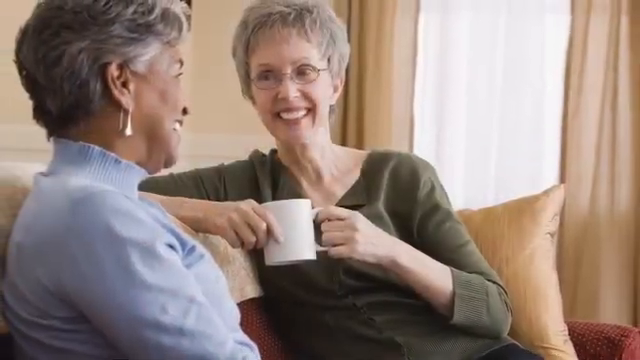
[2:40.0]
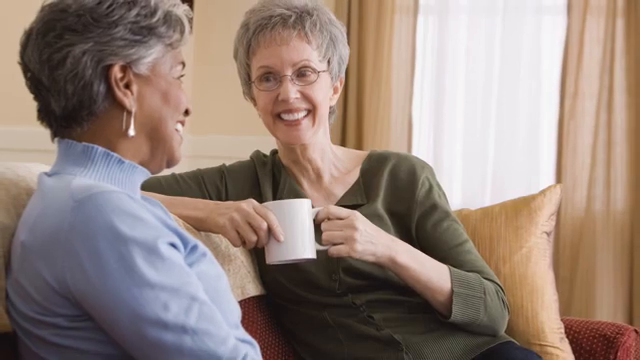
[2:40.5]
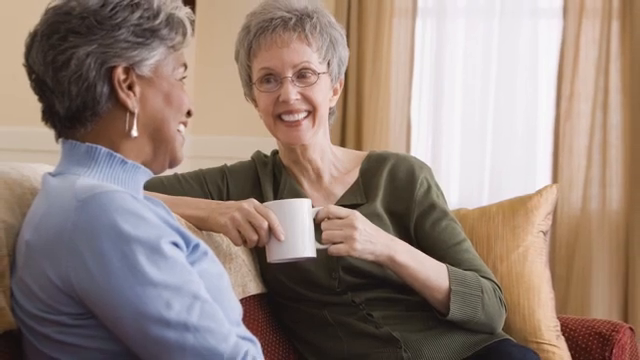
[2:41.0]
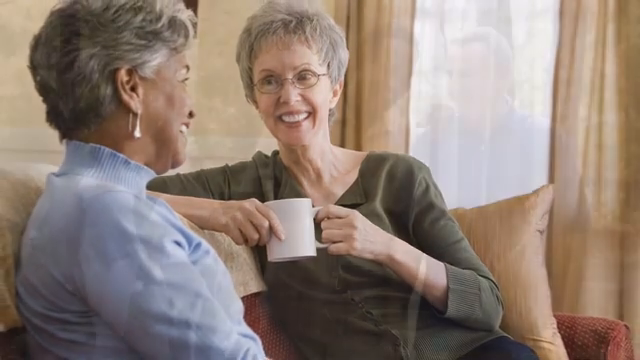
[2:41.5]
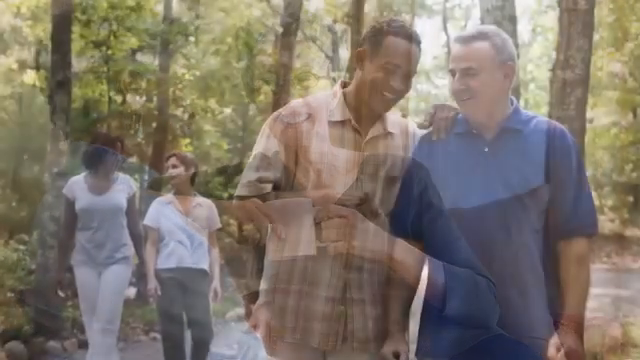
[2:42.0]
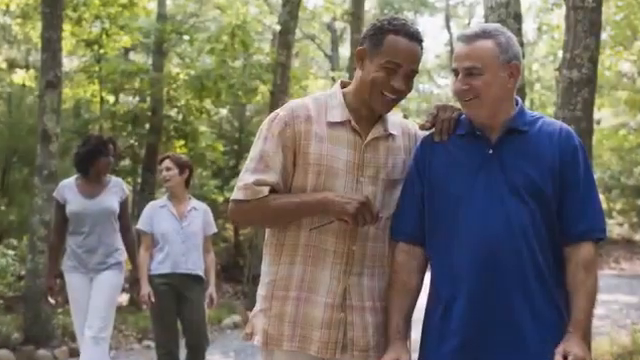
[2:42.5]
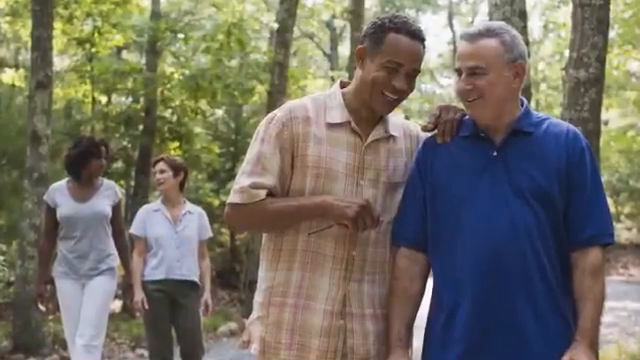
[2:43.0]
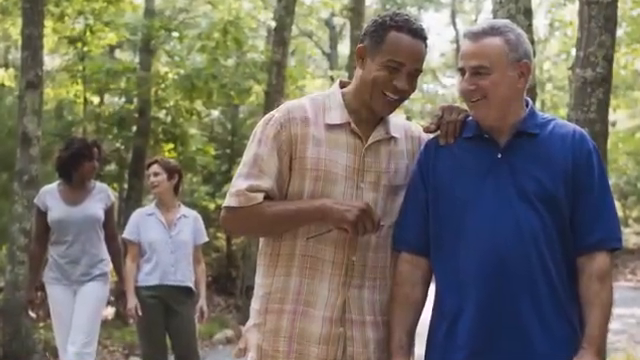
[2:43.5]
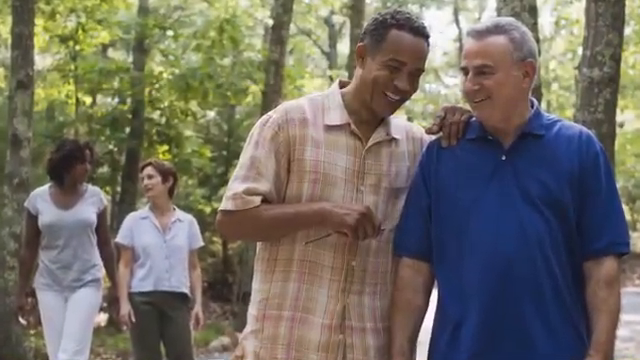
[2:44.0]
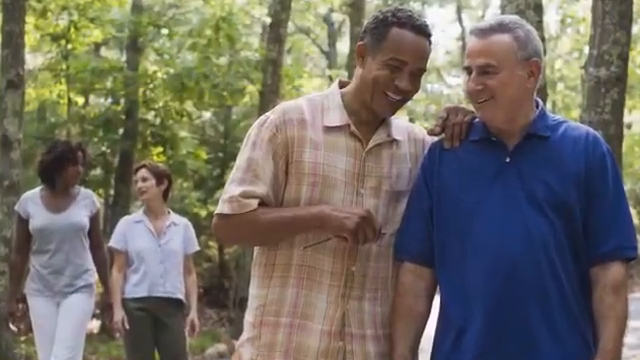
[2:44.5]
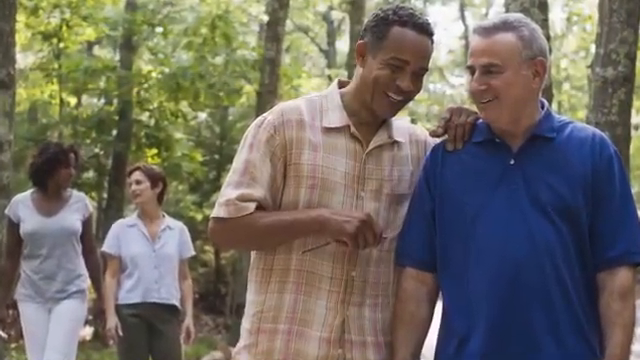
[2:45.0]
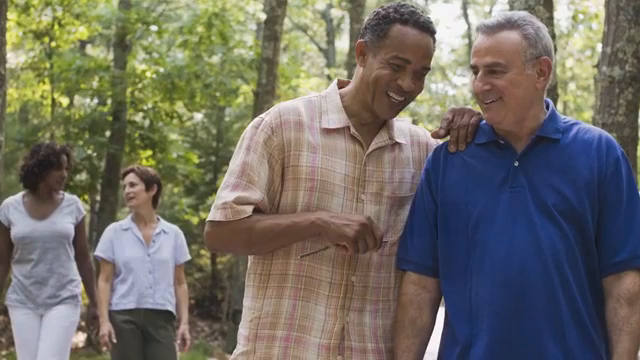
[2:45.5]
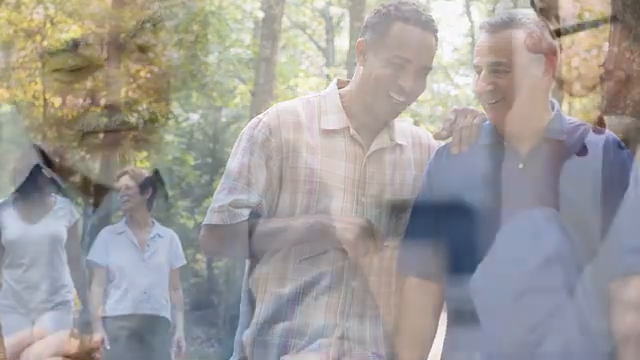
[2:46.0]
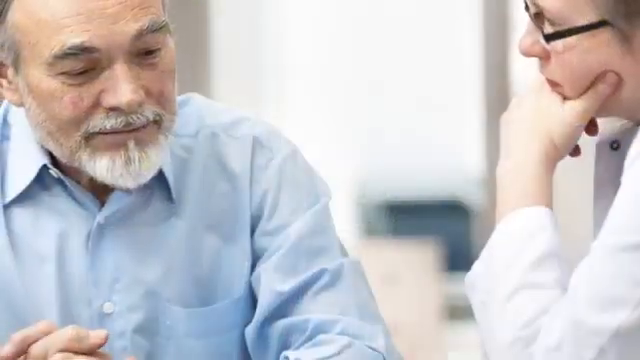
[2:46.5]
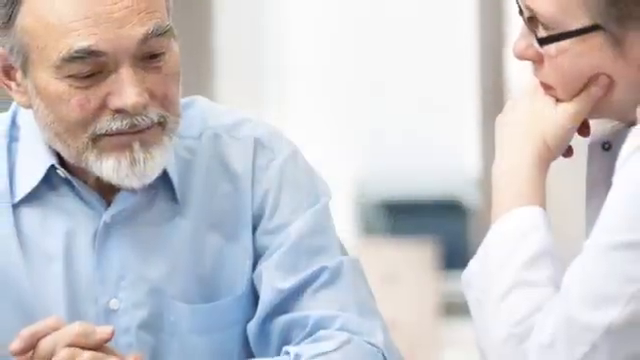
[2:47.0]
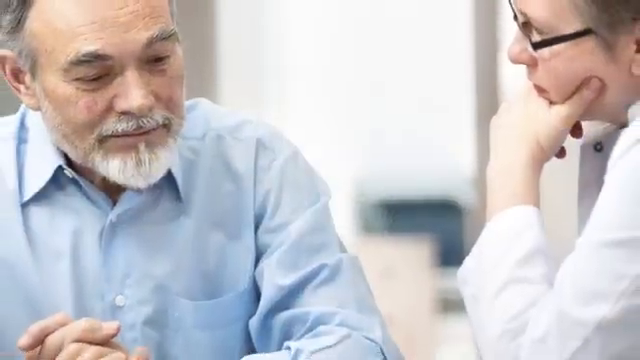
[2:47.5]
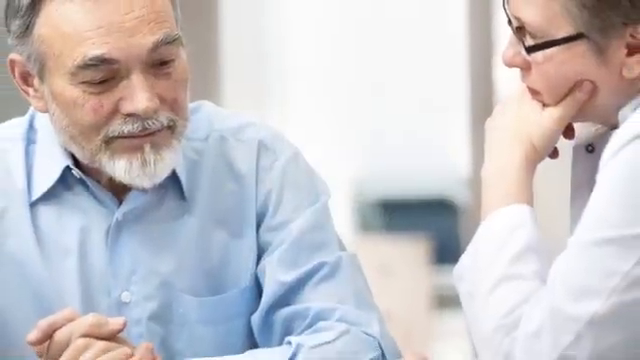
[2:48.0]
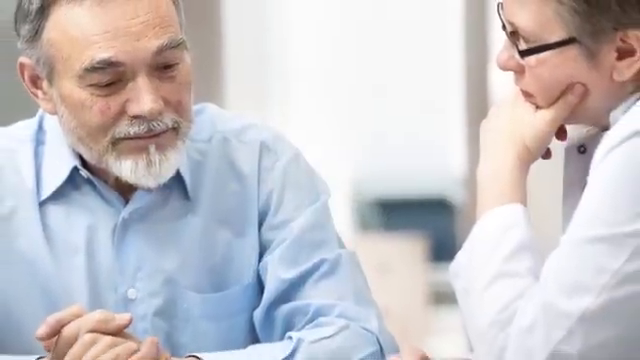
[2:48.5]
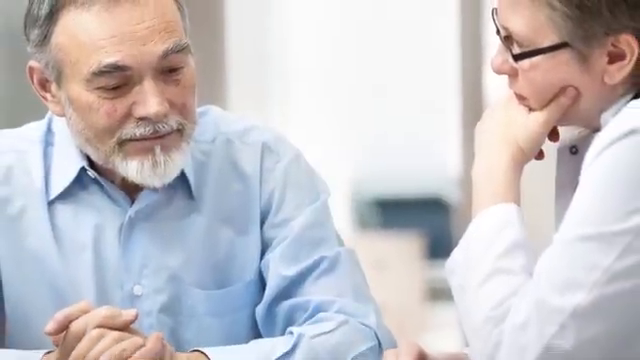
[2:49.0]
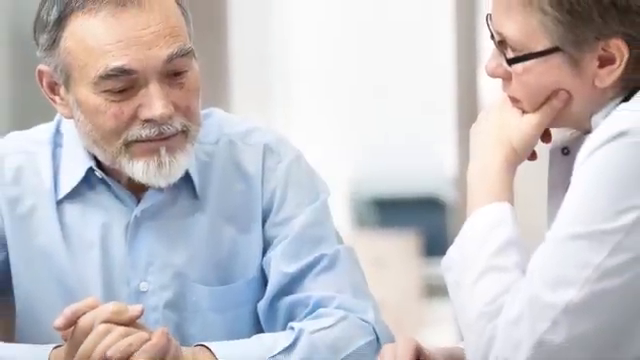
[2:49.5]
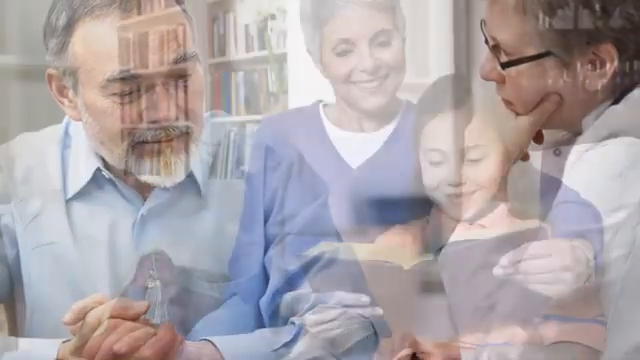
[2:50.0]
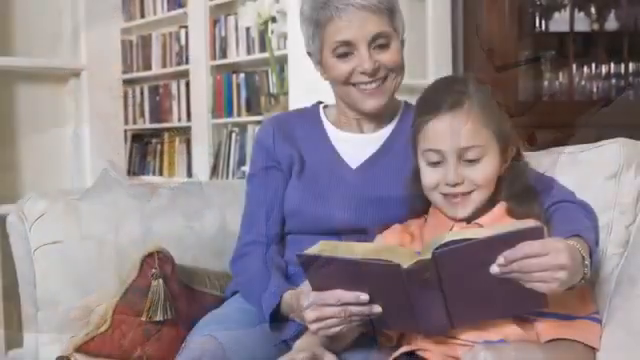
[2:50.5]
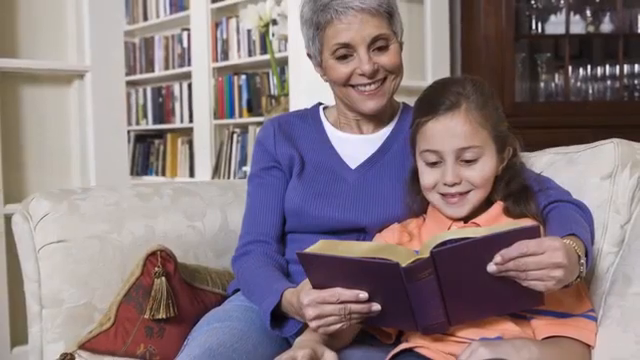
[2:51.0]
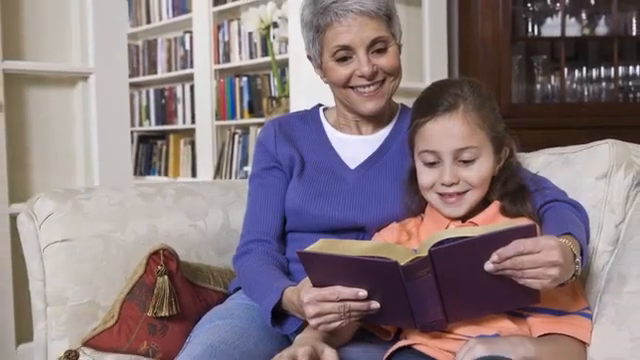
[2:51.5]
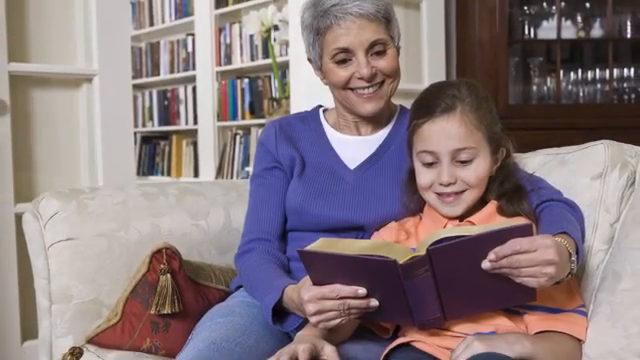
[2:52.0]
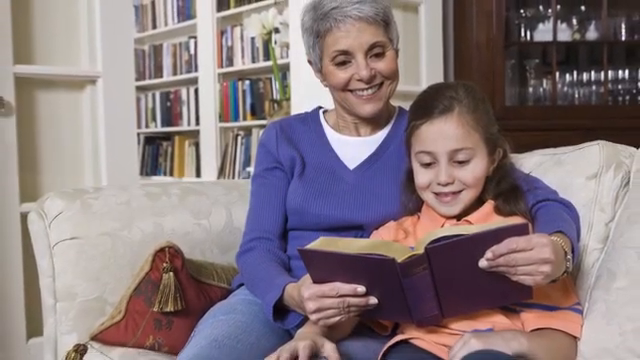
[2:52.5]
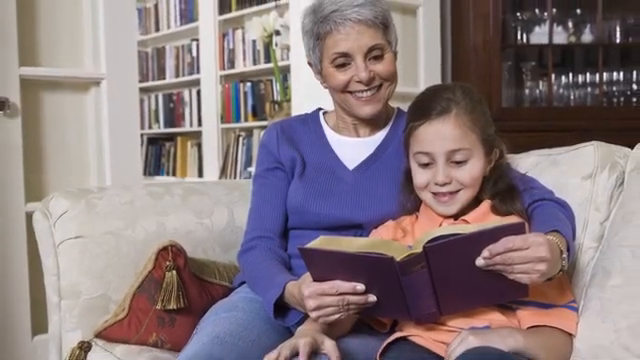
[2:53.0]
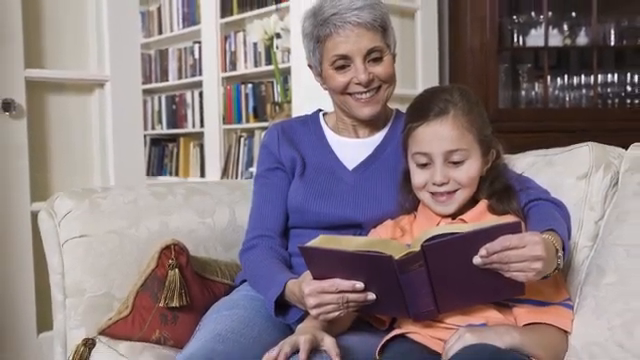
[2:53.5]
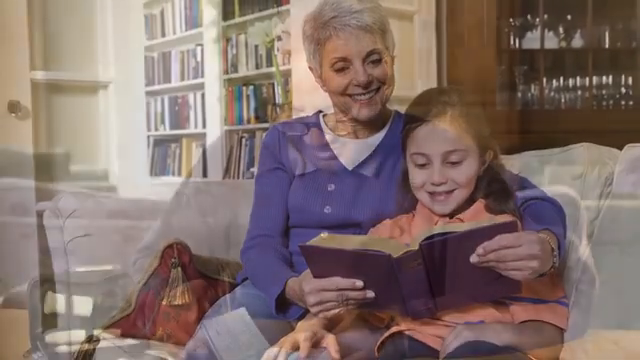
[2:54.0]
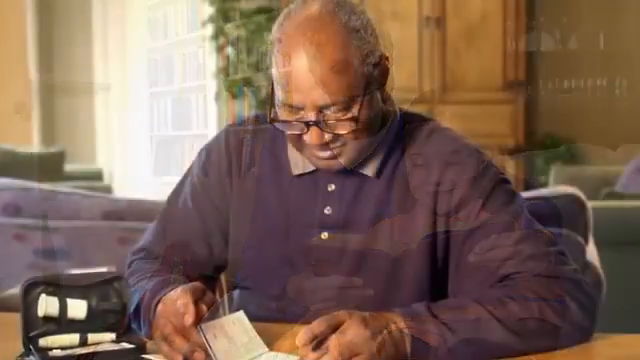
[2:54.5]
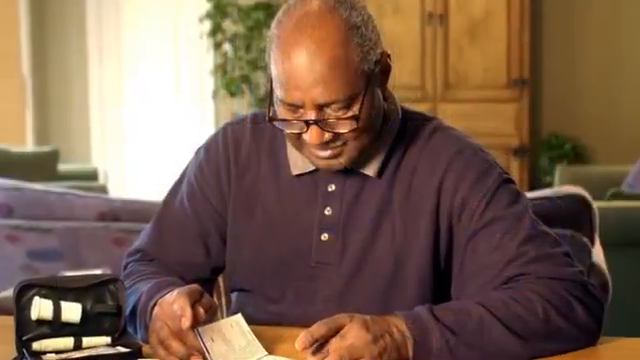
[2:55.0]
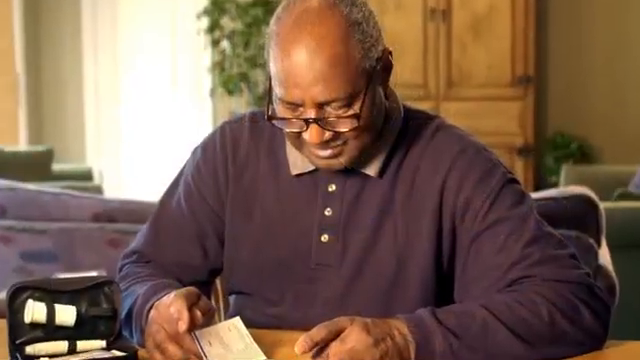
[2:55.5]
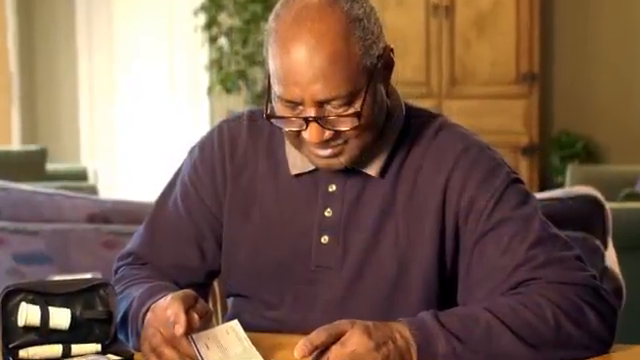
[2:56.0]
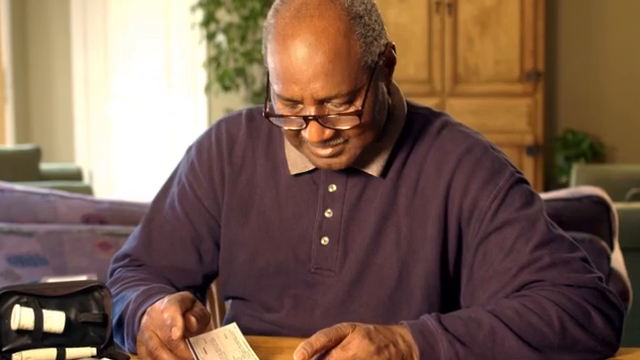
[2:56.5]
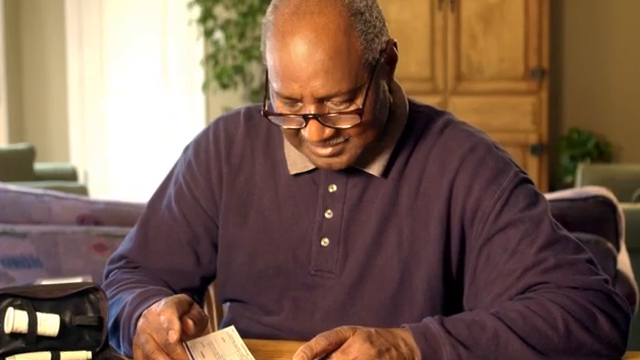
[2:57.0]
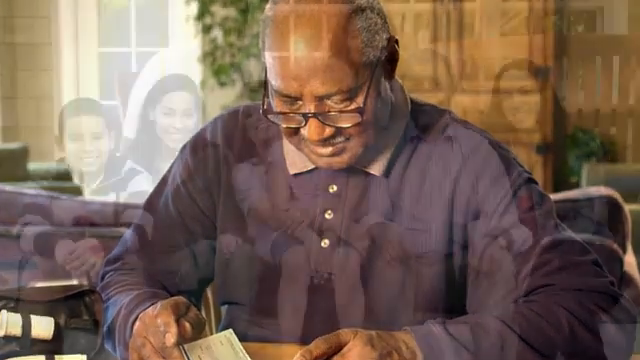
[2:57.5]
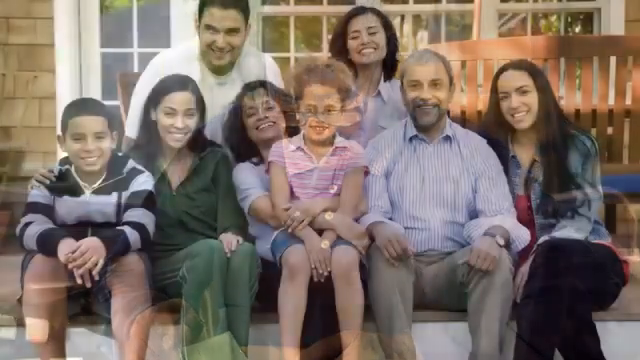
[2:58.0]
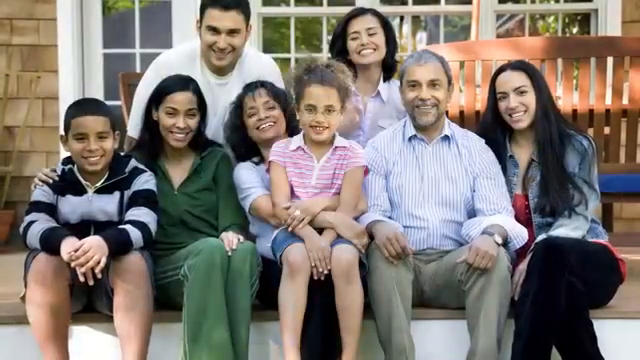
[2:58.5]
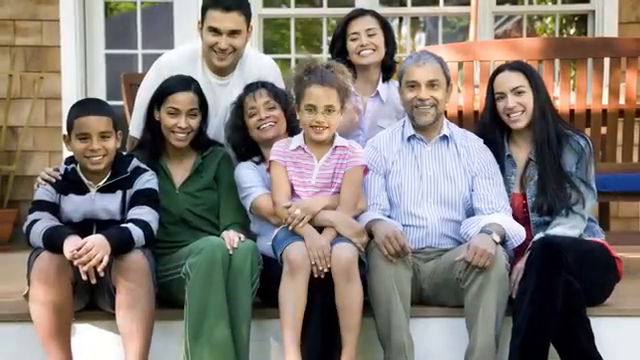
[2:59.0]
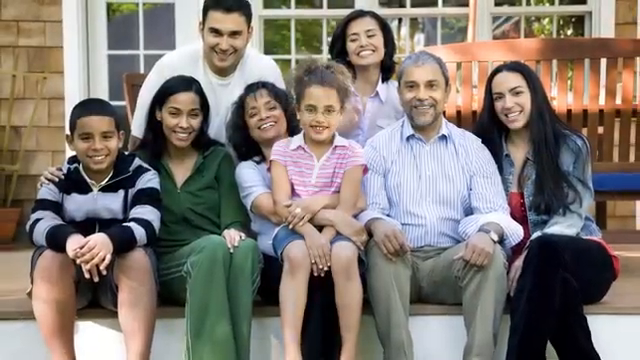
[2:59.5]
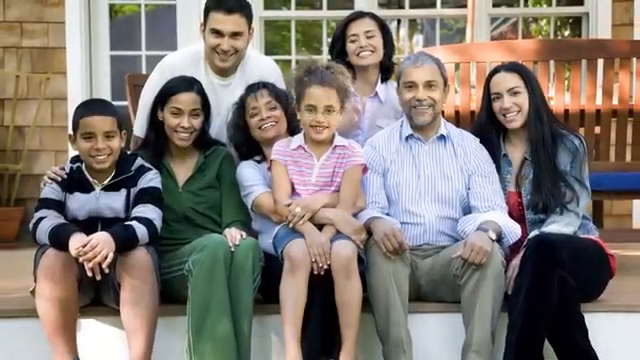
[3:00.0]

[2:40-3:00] A number of elderly people appear to be talking to each other in various settings, including a forest with trees all around. They are cheerful and, judging by their gray hair and wrinkles, seem to be over 60 years old. They talk with the people around them and have fun together.